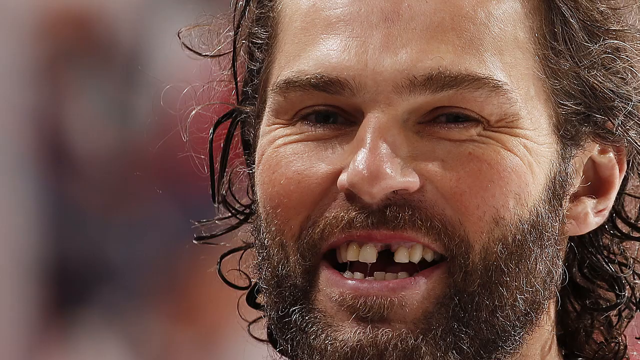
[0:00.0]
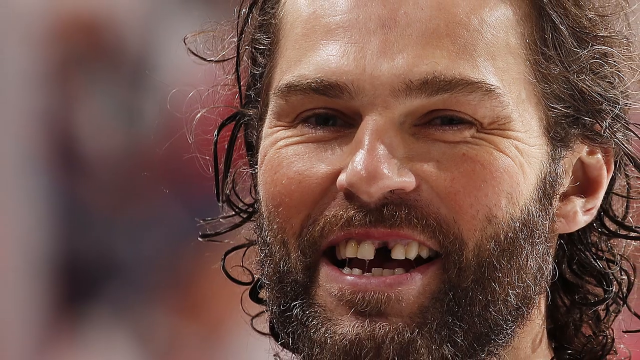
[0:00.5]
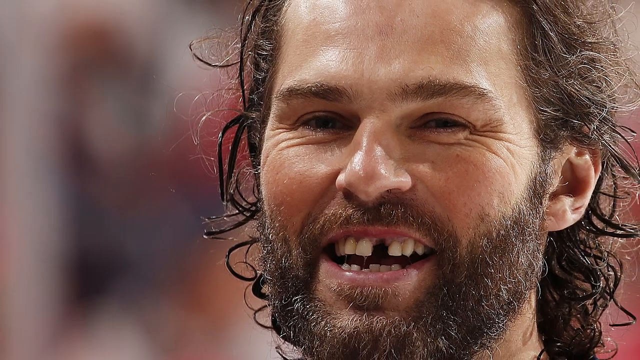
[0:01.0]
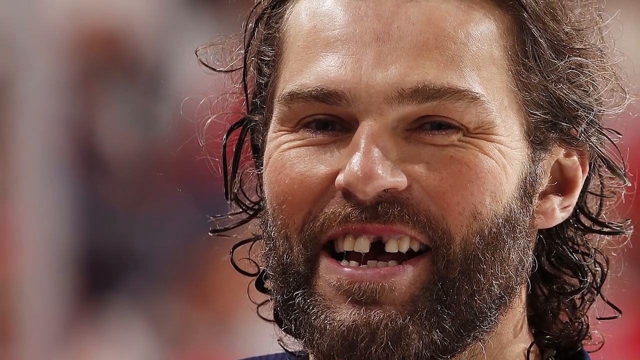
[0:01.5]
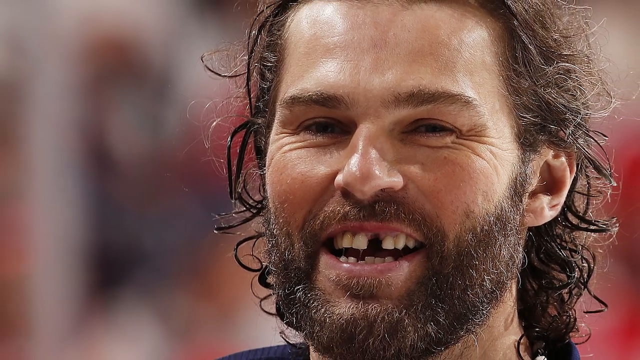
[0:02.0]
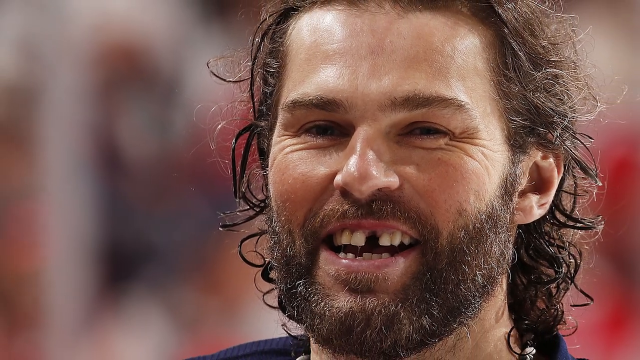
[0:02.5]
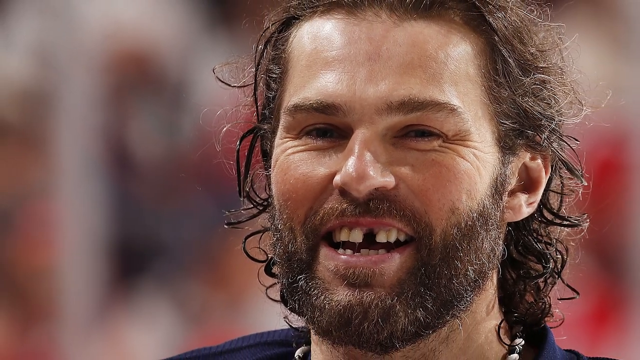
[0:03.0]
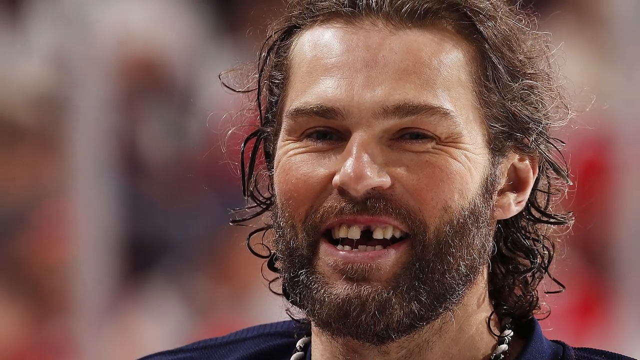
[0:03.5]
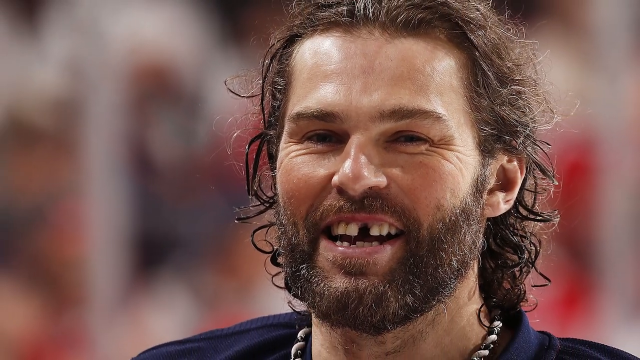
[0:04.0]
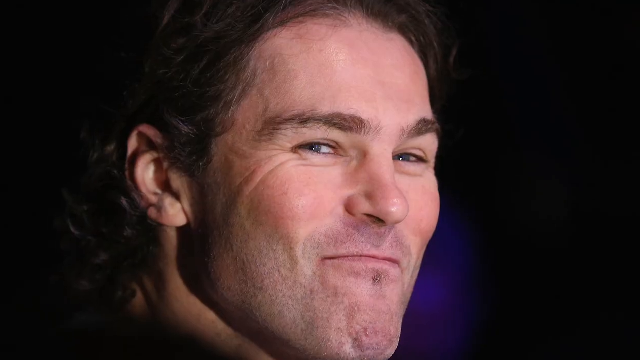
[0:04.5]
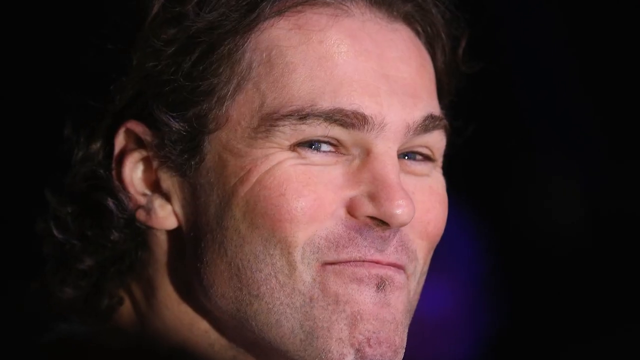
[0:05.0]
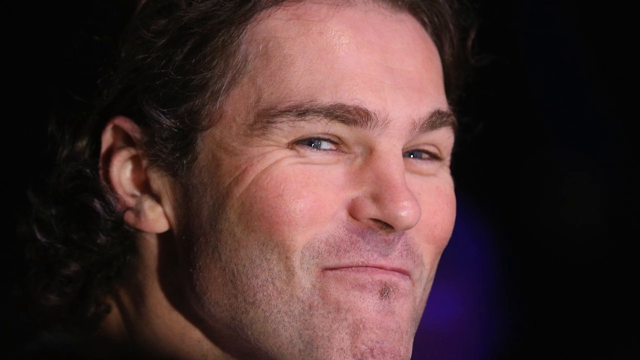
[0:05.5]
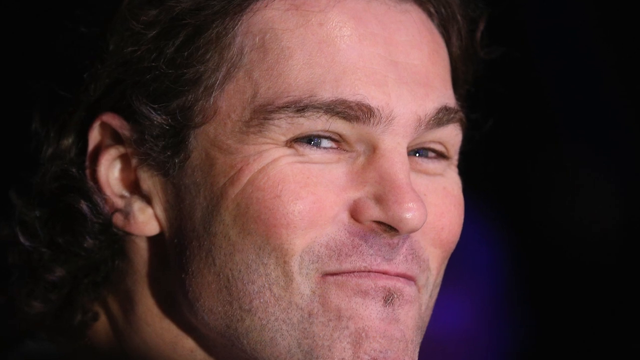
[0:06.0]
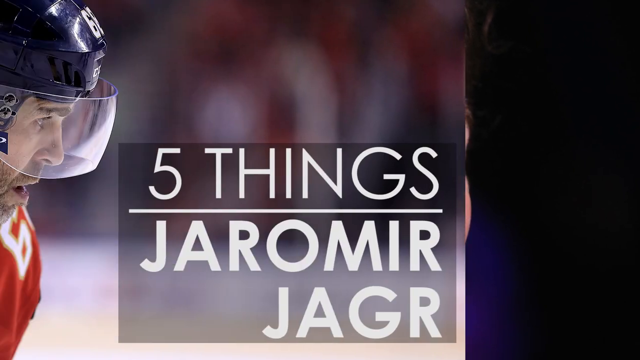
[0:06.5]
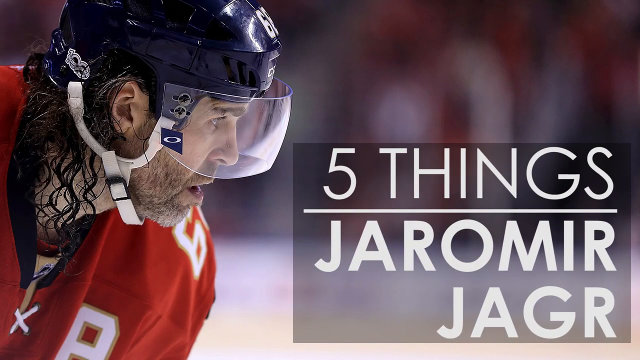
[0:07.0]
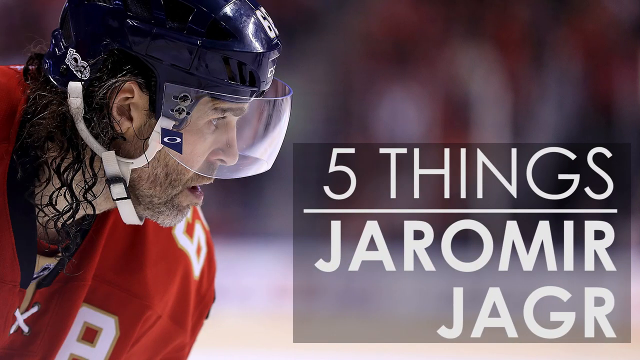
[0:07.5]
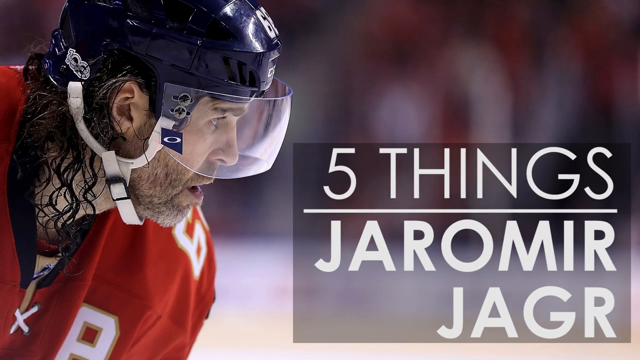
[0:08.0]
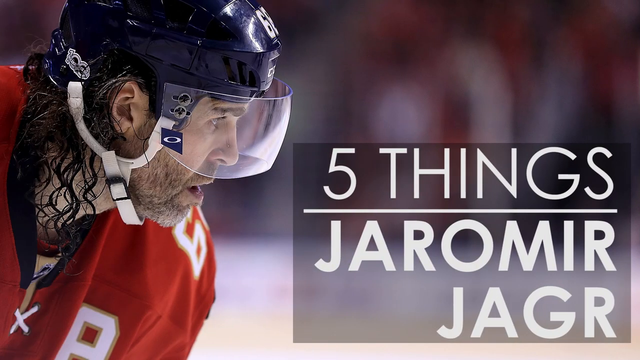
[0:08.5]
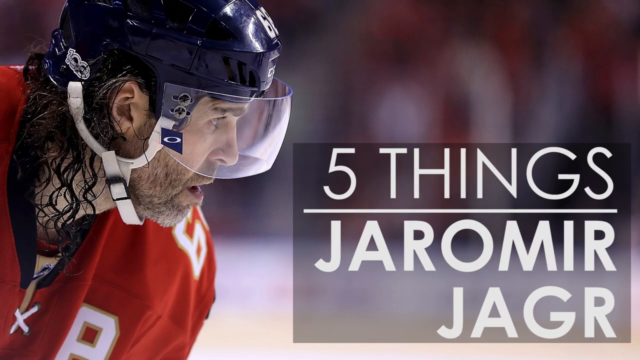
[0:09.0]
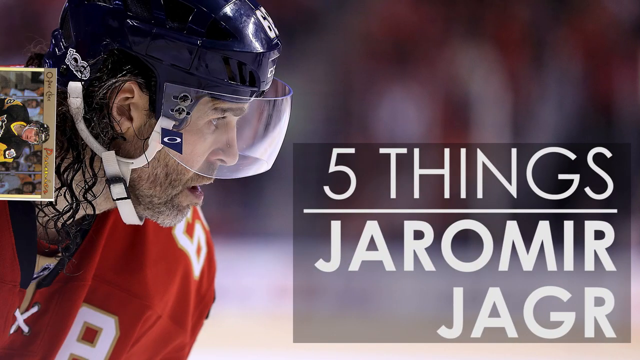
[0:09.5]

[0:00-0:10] The video begins with a white male who is missing a front tooth, followed by another white male smirking at the camera. Next comes another white male wearing a red and white shirt who looks like a hockey player. Two pictures flip on the screen, and two other hockey players are shown. At the bottom, a headline reads "5 things Jeremiah JAGR".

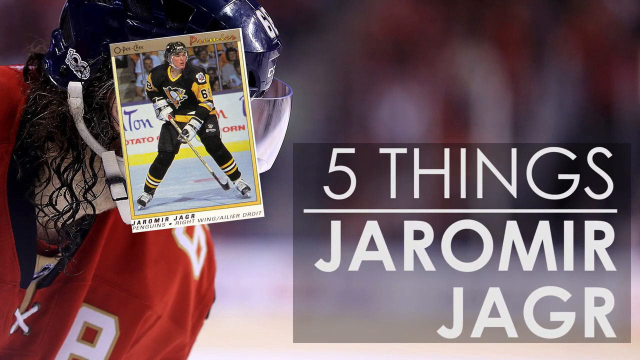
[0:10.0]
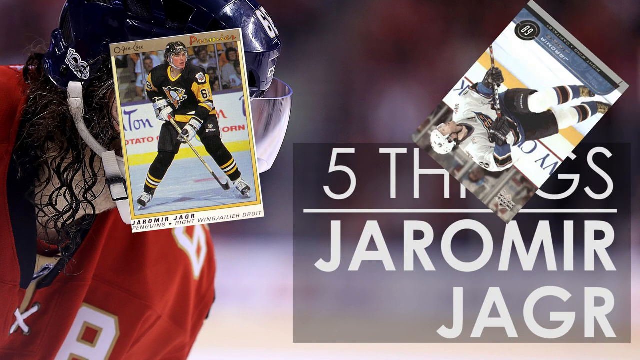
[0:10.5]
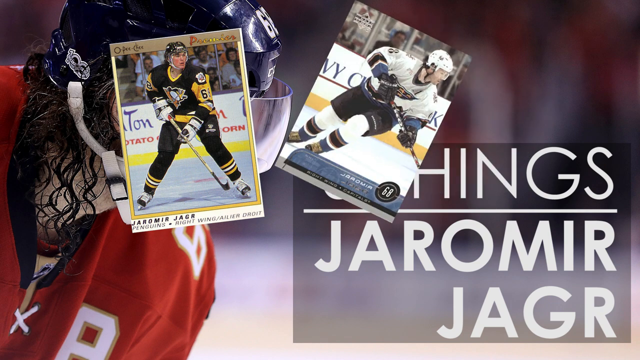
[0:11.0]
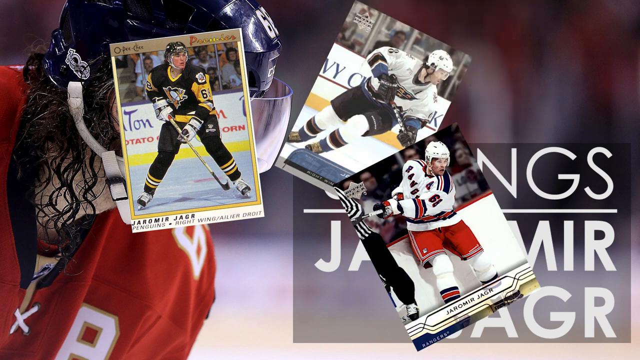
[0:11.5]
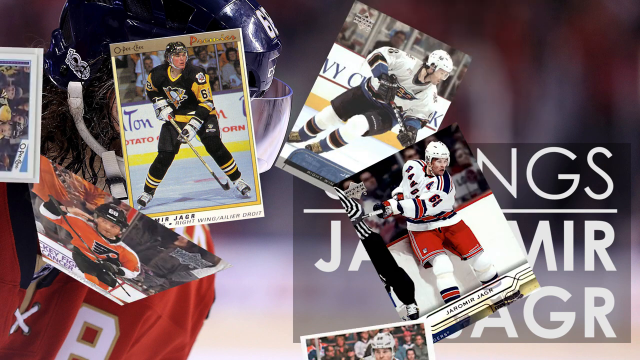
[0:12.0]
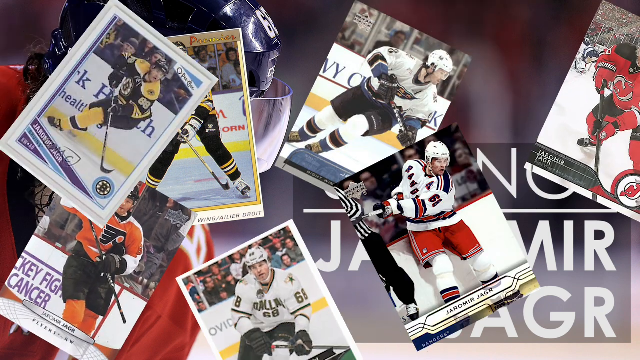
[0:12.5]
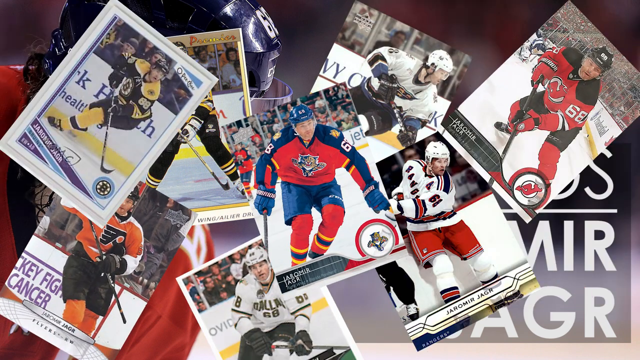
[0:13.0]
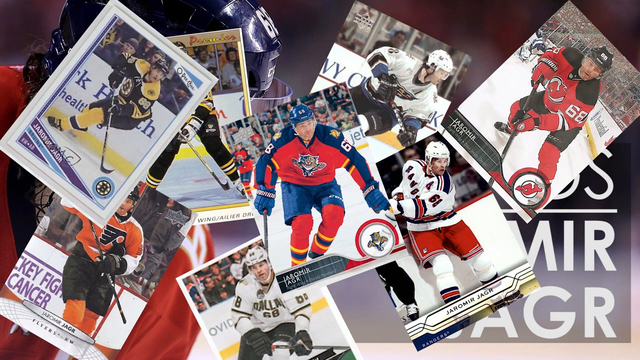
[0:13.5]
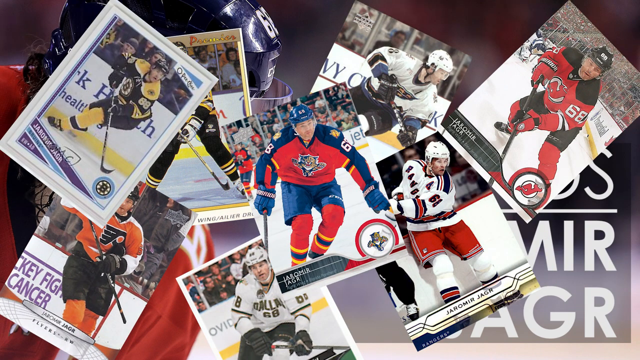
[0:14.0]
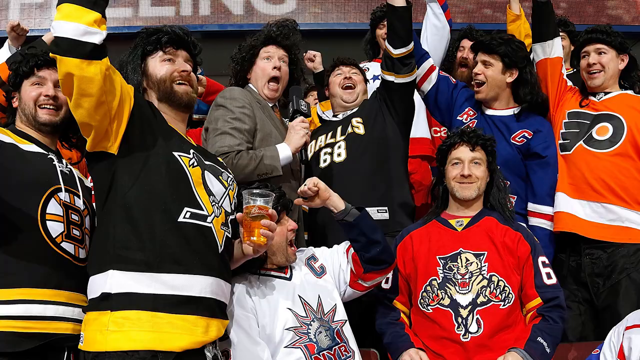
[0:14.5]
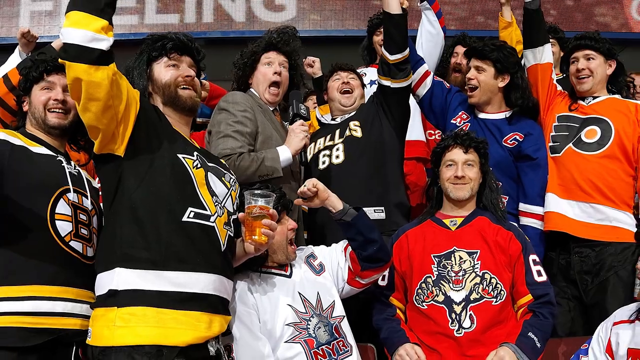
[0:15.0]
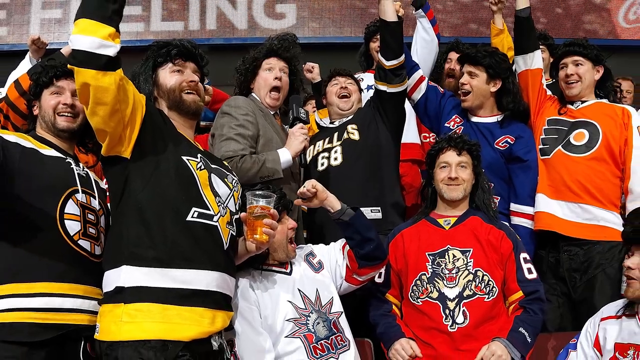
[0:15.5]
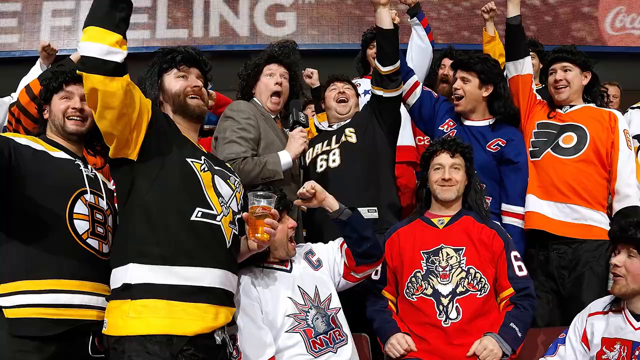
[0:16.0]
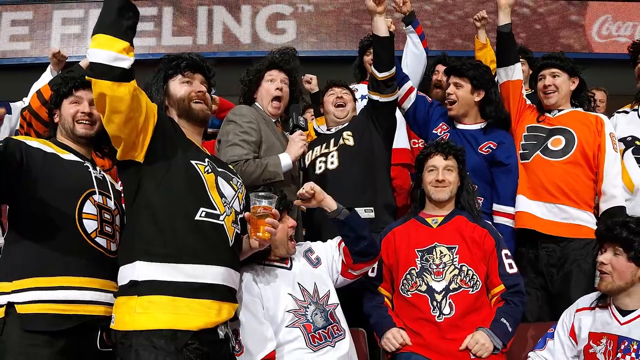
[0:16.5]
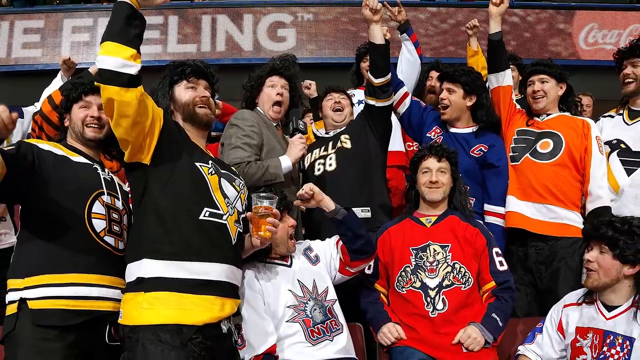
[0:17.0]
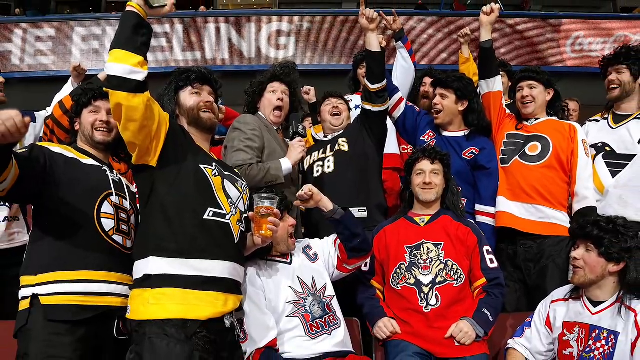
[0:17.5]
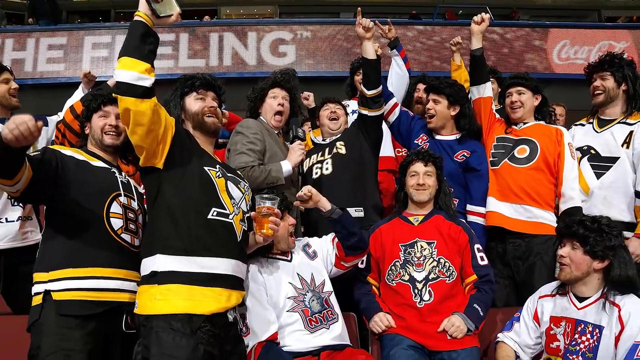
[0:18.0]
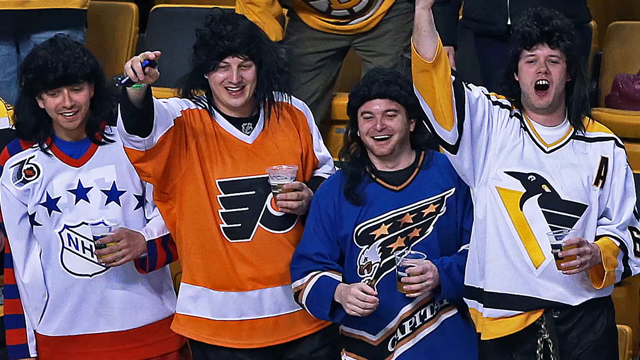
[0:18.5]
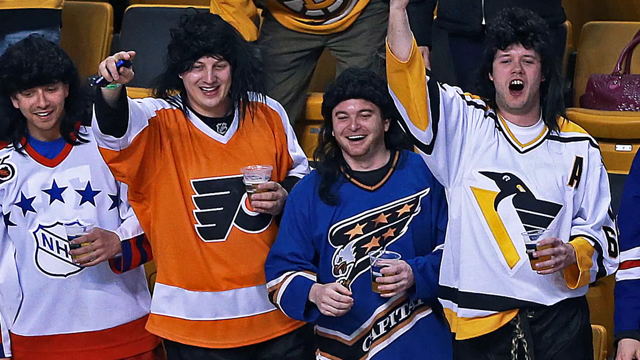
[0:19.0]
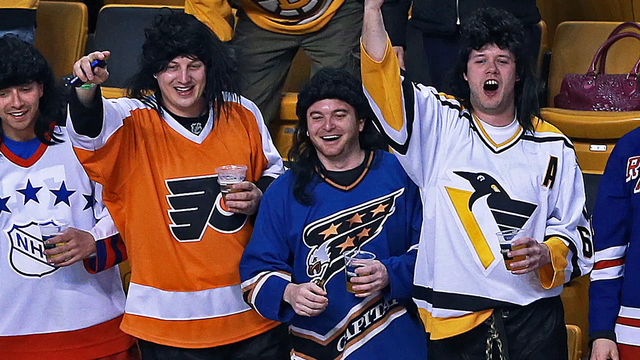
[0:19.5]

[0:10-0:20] The hockey player in red and white appears, and a bunch of pictures come up. A few people seem to be celebrating; it looks like a victory. Five of them are in hockey kit: two wear blue hockey jerseys, two wear white hockey jerseys, and one wears an orange hockey jersey. They are all holding a cup of beer, and the other one behind them is holding the same thing. They seem to be in a stadium where there is a yellow chair.